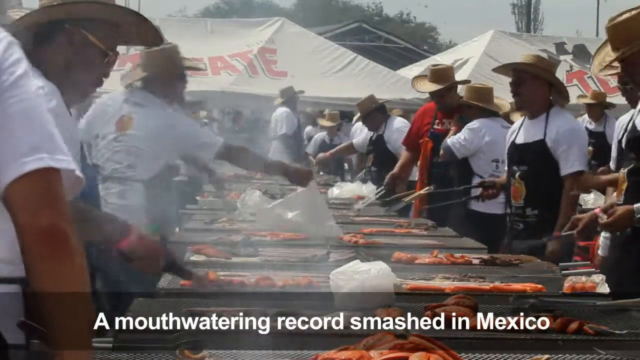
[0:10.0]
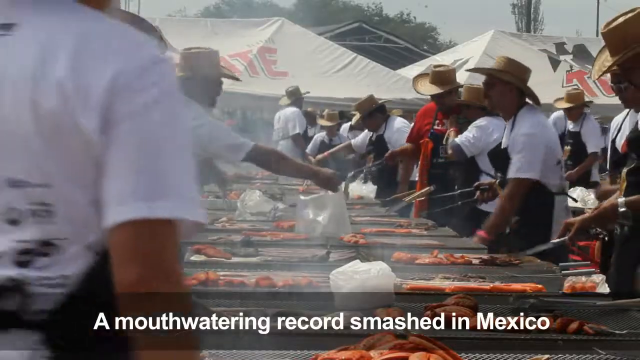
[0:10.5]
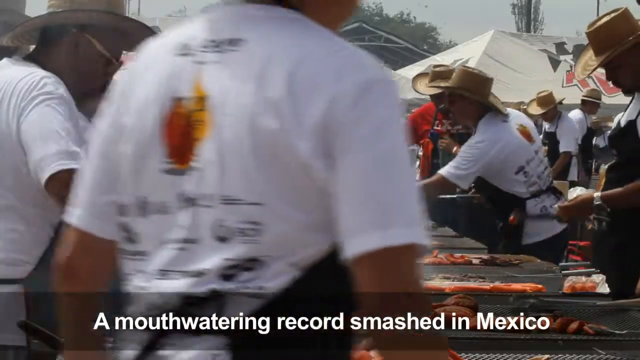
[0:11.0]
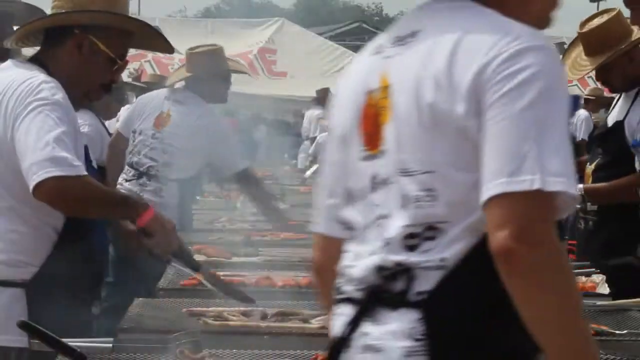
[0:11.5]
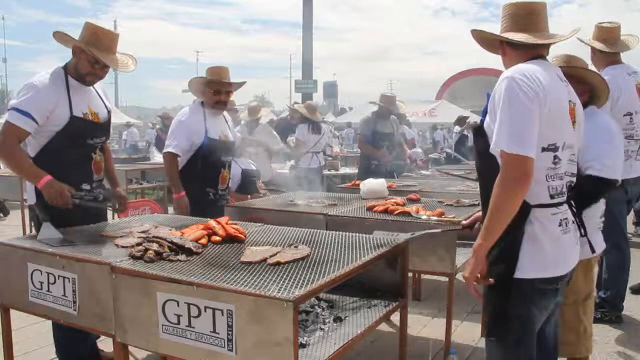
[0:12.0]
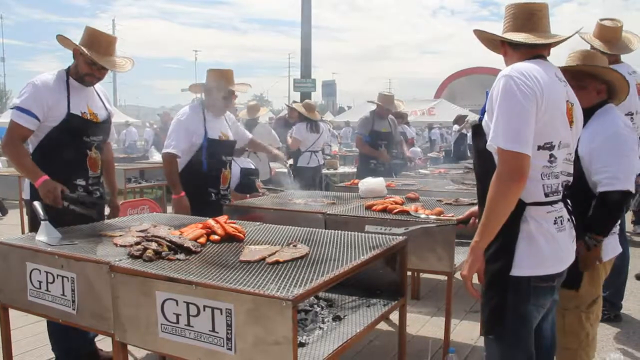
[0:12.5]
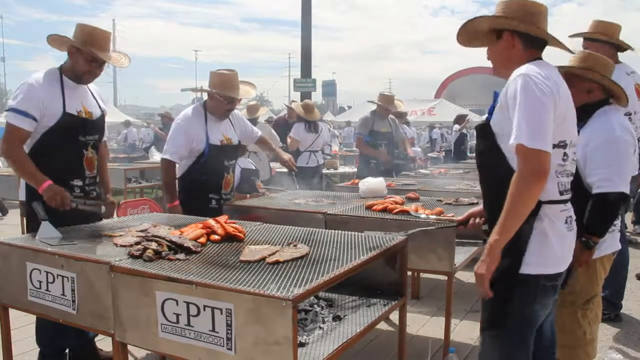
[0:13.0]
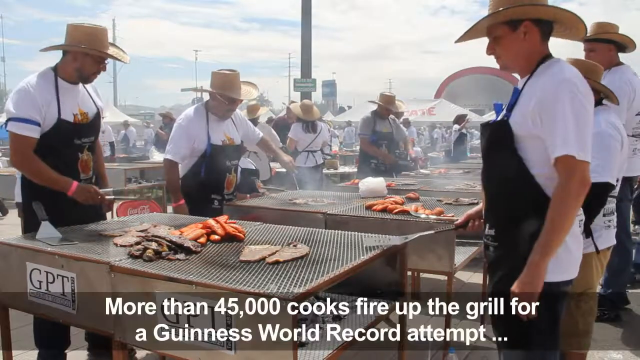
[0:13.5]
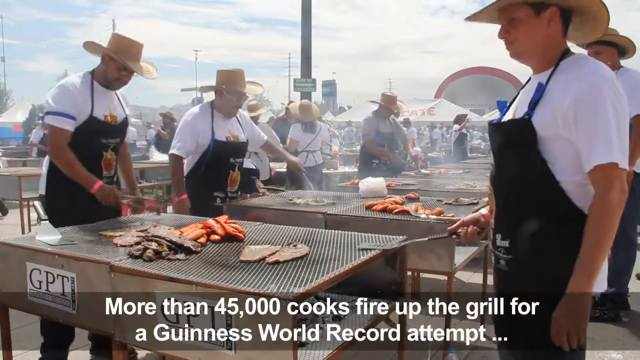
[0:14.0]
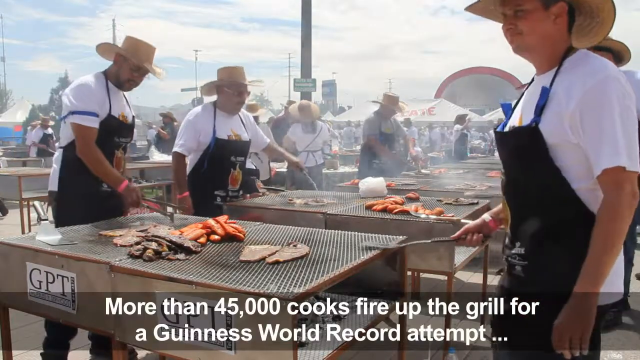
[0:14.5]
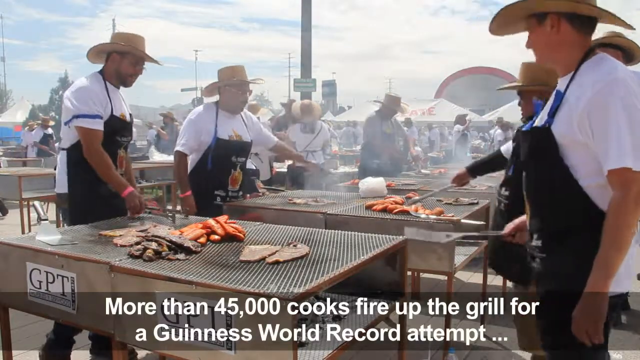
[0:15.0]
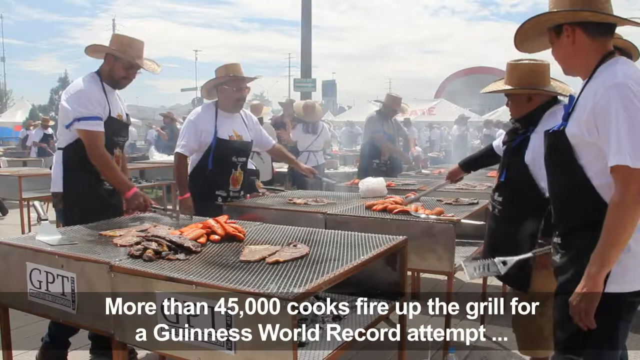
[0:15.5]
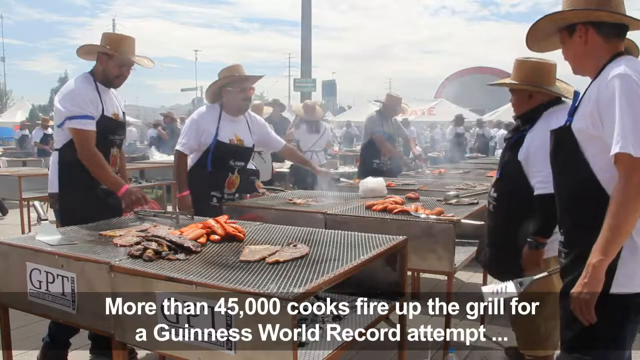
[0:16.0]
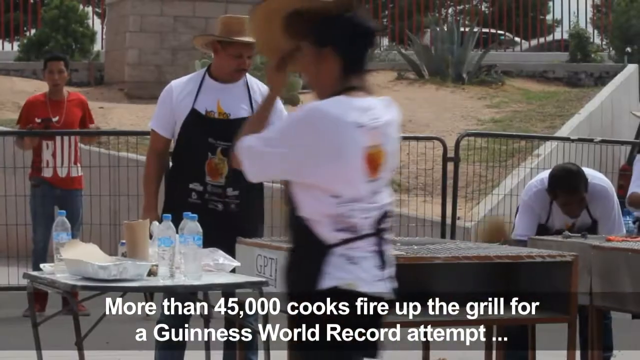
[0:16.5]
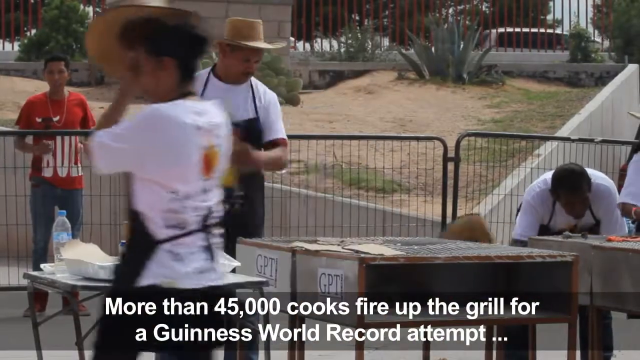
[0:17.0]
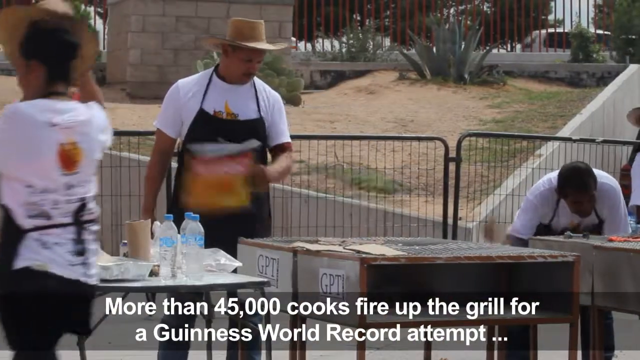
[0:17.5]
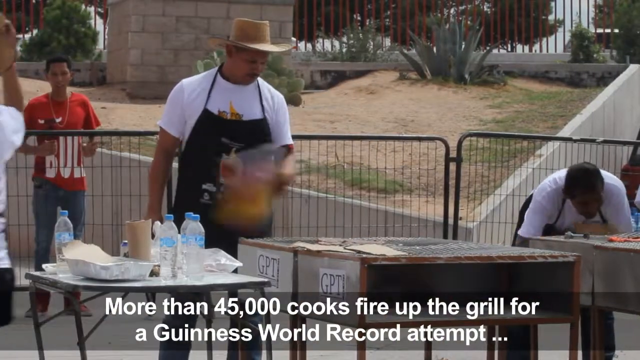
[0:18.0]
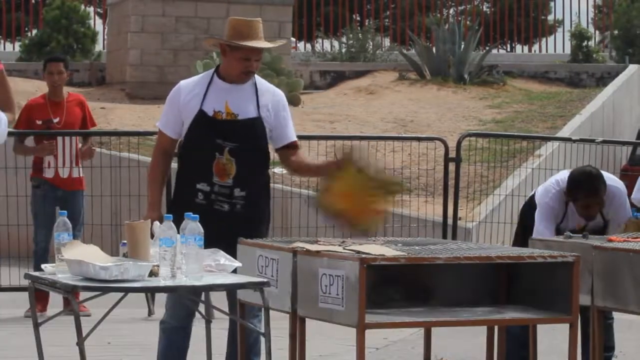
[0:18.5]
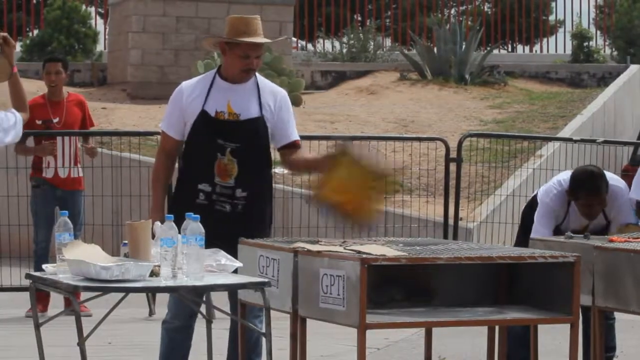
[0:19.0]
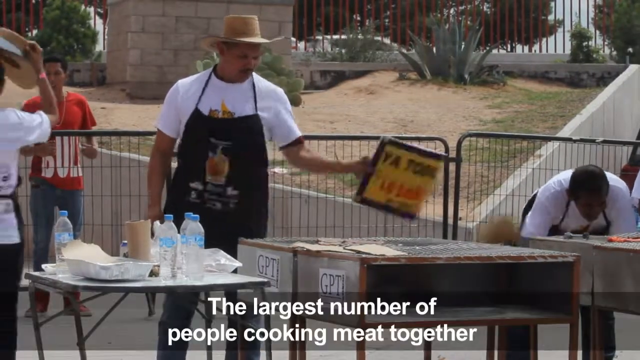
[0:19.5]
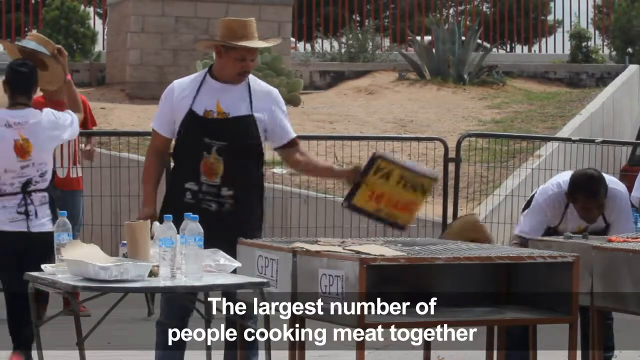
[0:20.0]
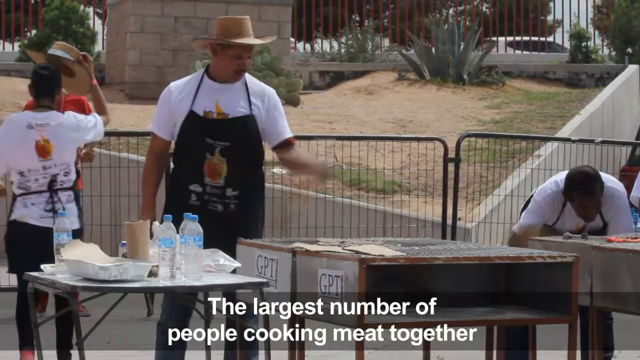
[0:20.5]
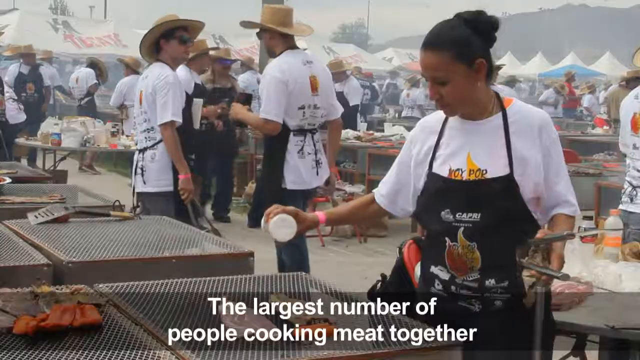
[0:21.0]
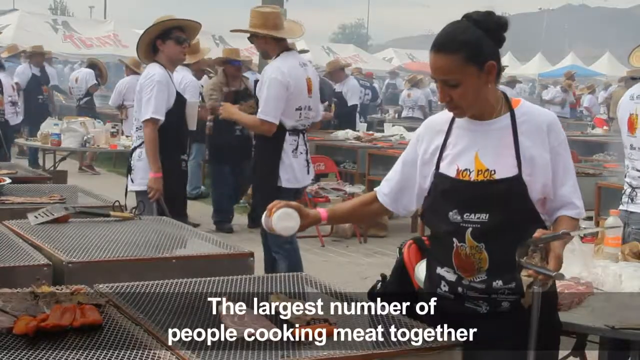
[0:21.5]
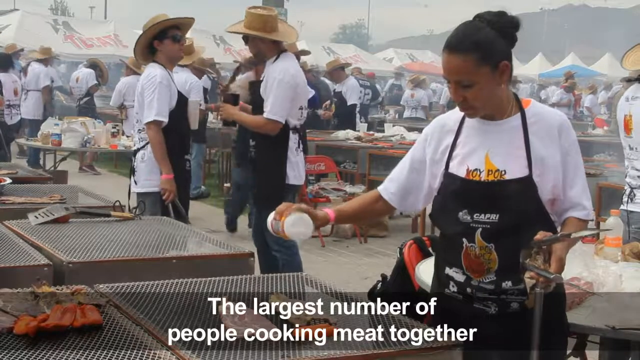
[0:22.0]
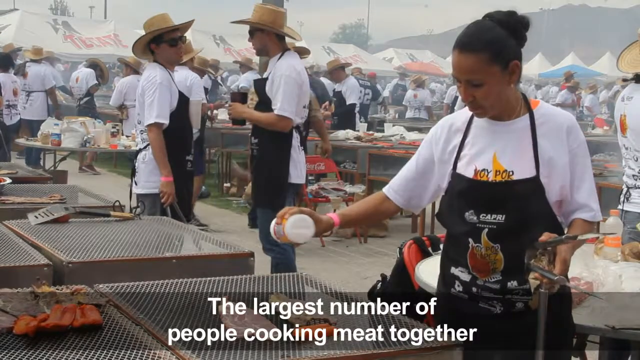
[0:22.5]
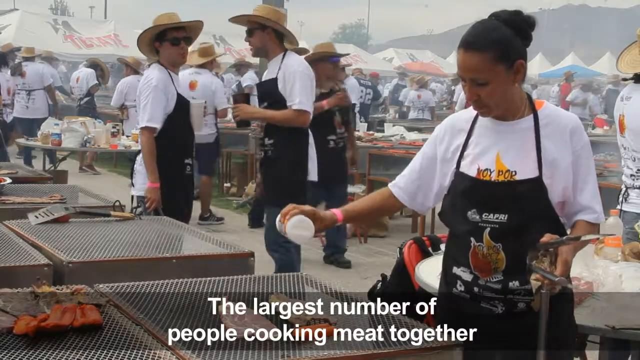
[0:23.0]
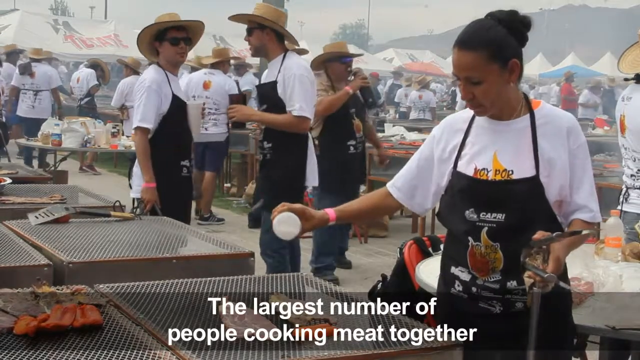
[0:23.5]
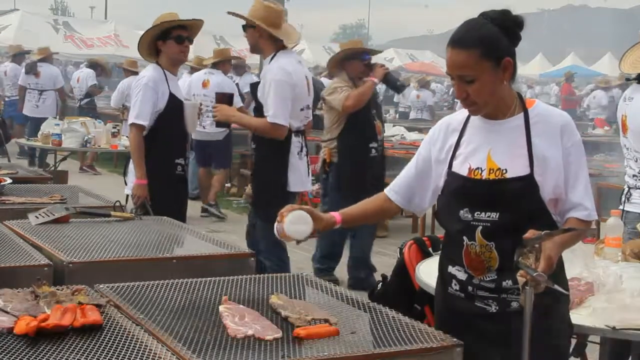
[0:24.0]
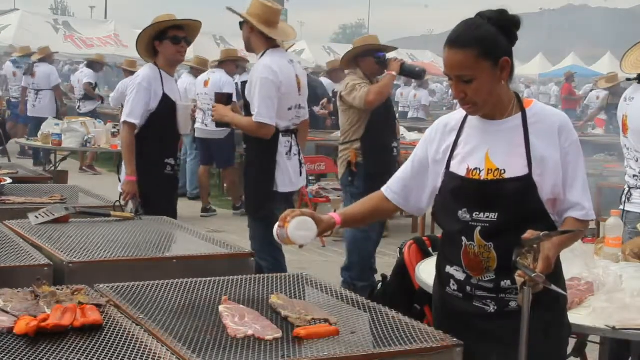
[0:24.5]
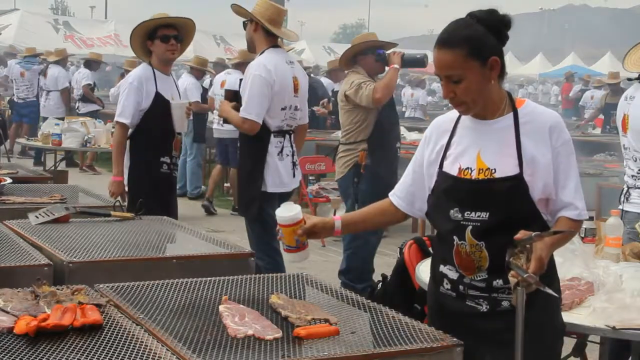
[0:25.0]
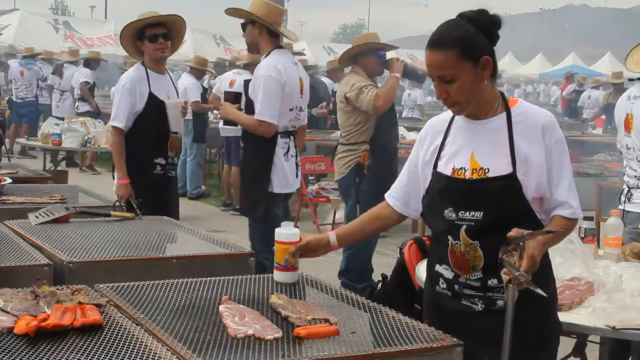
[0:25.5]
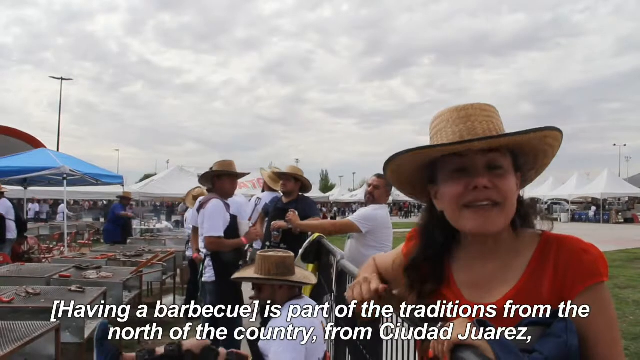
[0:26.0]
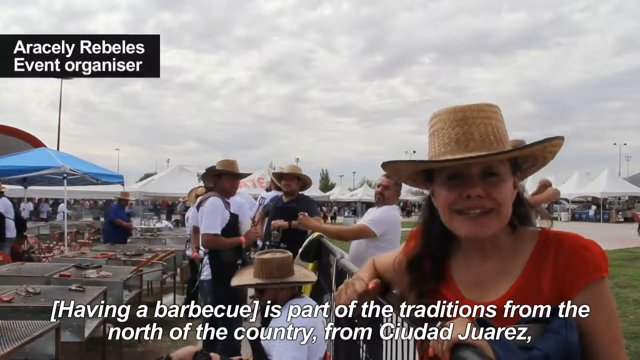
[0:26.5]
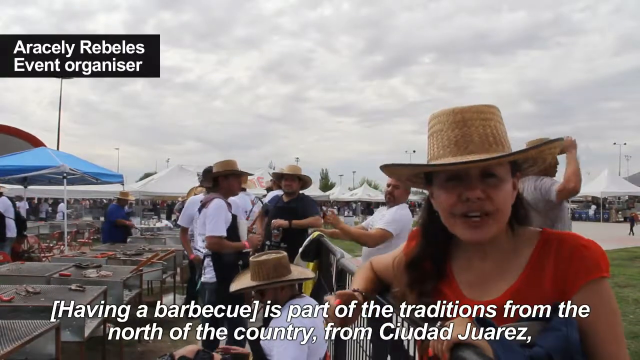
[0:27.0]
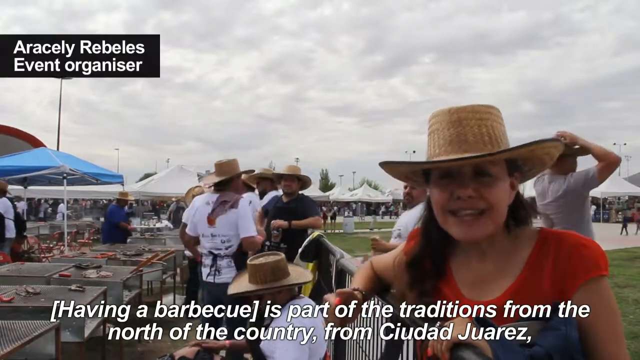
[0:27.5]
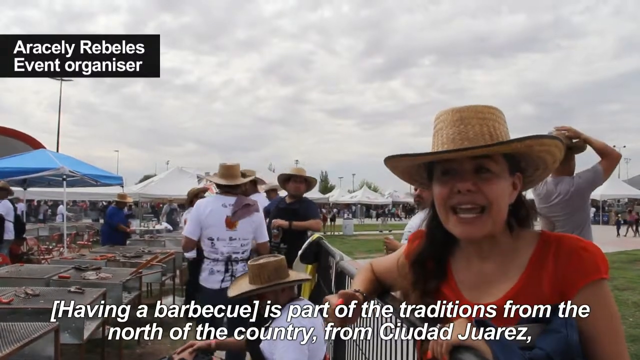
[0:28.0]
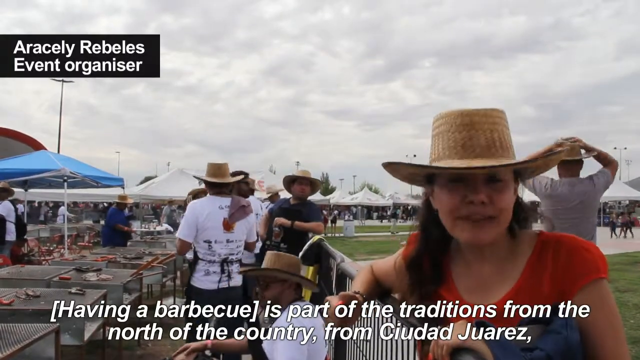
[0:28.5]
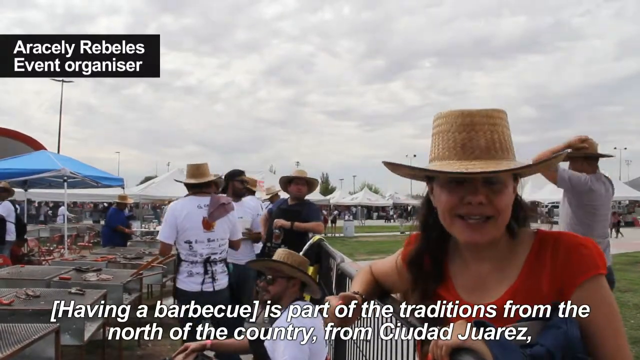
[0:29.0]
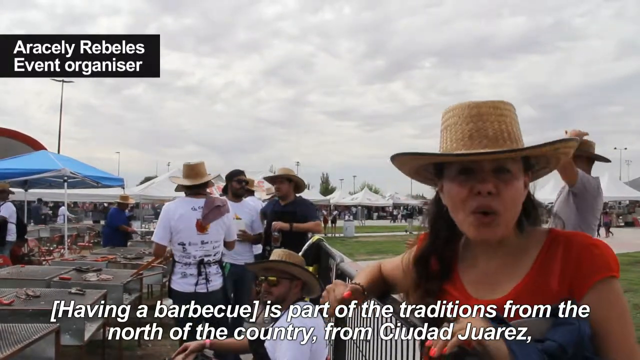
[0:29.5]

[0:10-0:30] The large outdoor barbecuing event in Mexico continues. Groups of men wear white t-shirts and black aprons with pints of beer with flames coming out of the top, along with straw cowboy-like hats. A caption at the bottom of the screen reads "a mouth-watering record smashed in Mexico." The men tend to the rows of barbecues with barbecue tongs to ensure the meat does not burn. The barbecues have the letters GPT on the side. A close-up shows some of the men barbecuing large steaks, and the men are then seen wafting their barbecues to encourage the coals. A caption on screen reads "more than 45,000 cooks fire up the grill for a Guinness World Record attempt" and then "the largest number of people cooking meat together." A lady sprinkles salt on her steaks. The camera then cuts to a woman in a red t-shirt and a straw cowboy hat, Aracely Rebelles, the event organiser. She says having a barbecue is part of the traditions from the north of the country, from Ciudad Juarez.